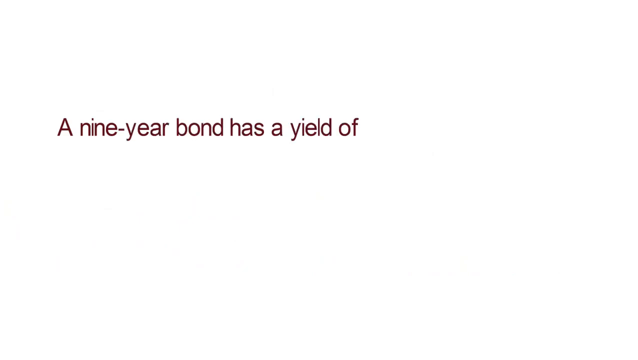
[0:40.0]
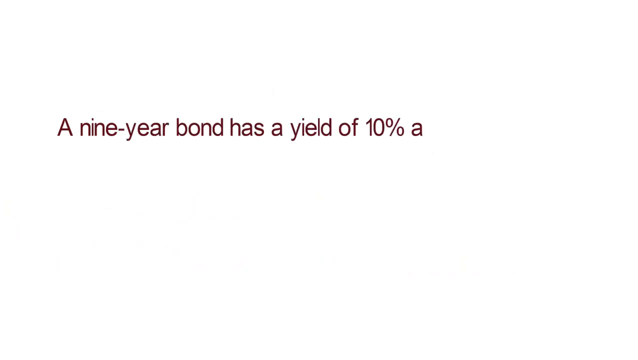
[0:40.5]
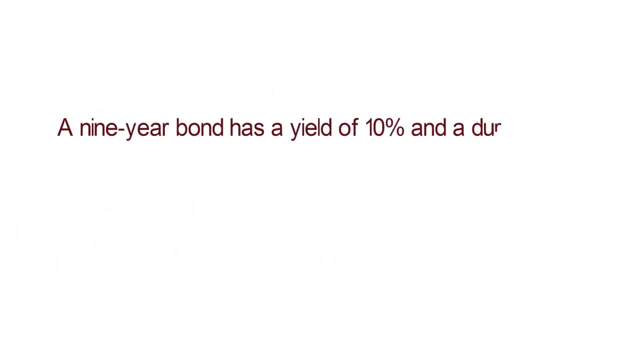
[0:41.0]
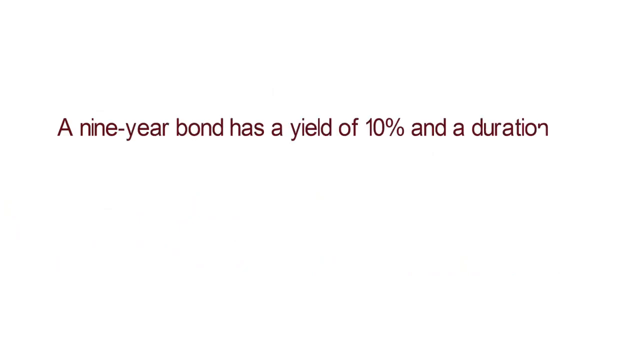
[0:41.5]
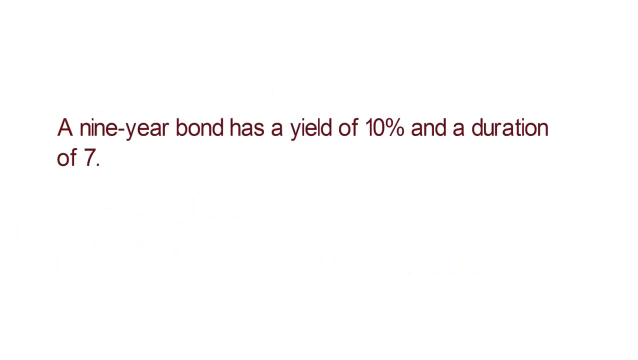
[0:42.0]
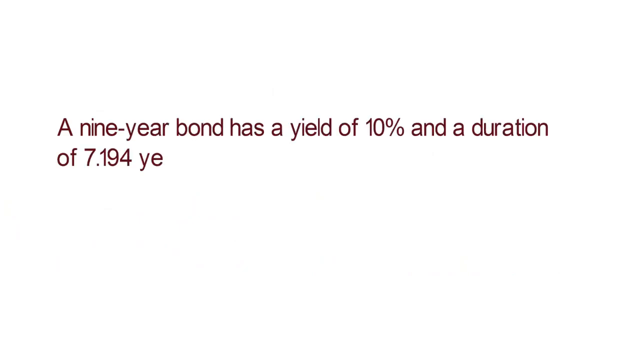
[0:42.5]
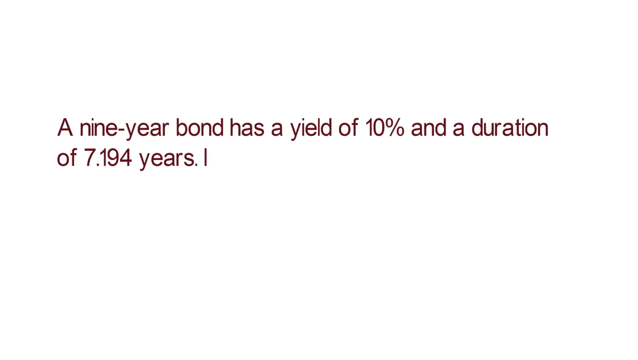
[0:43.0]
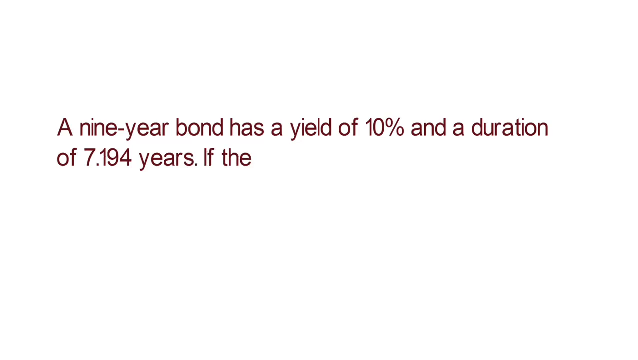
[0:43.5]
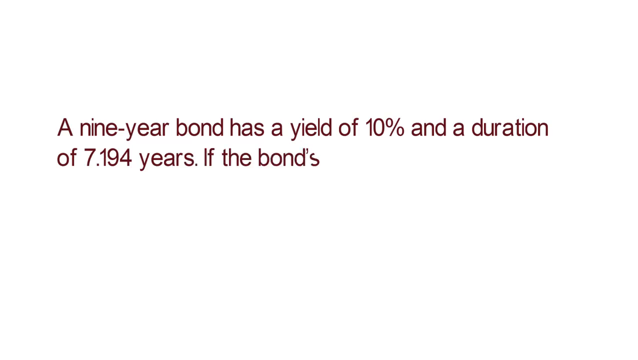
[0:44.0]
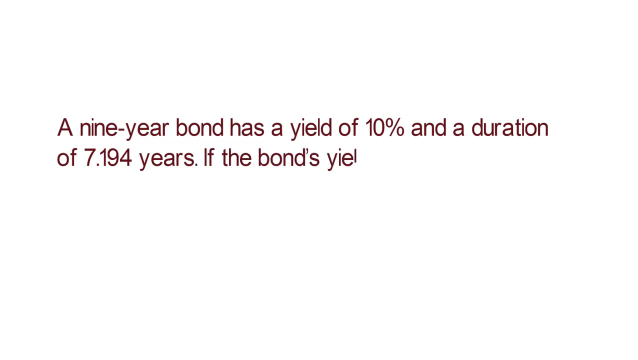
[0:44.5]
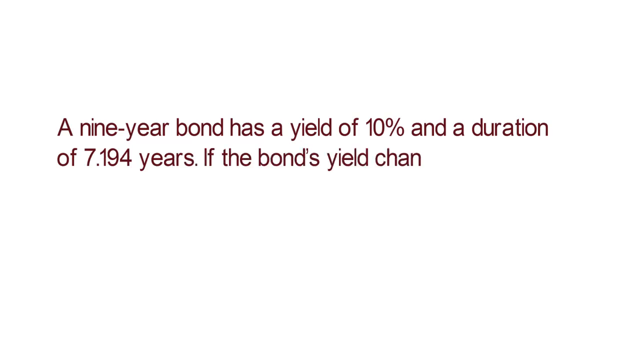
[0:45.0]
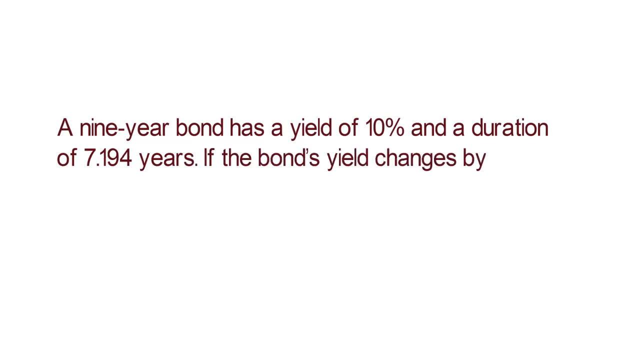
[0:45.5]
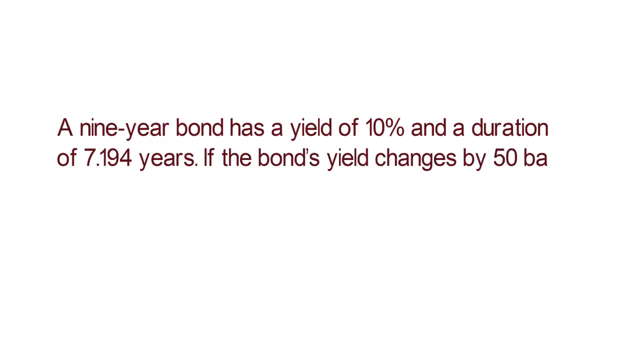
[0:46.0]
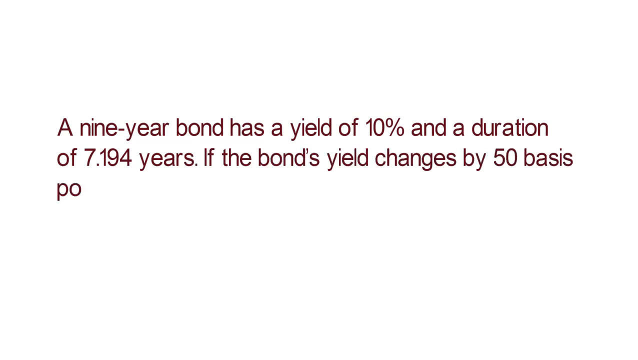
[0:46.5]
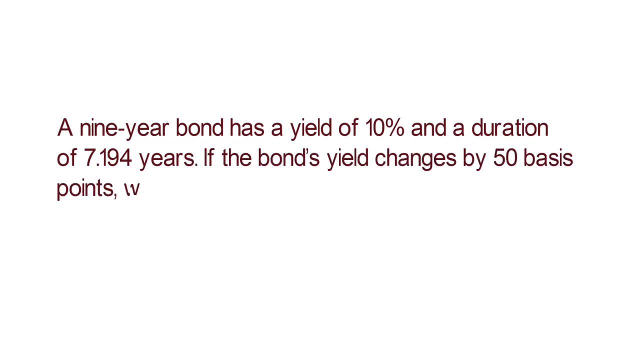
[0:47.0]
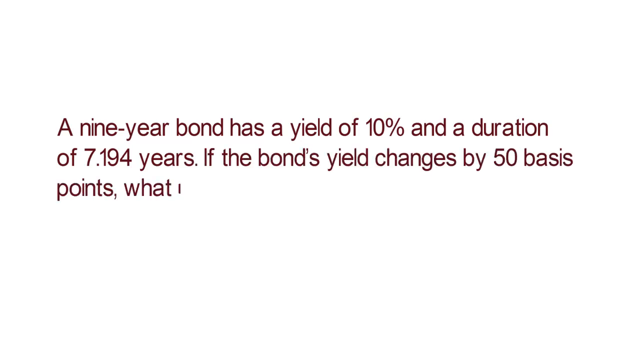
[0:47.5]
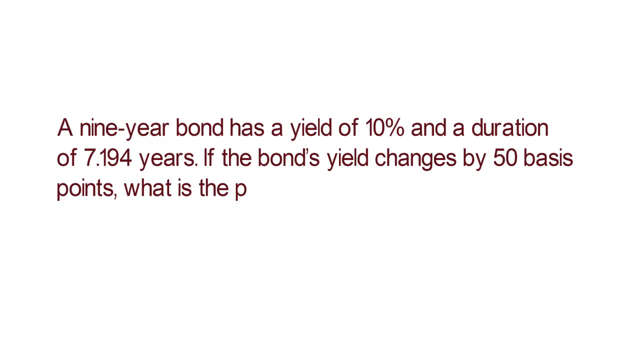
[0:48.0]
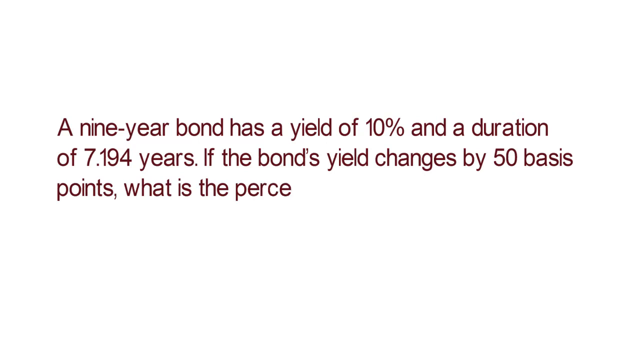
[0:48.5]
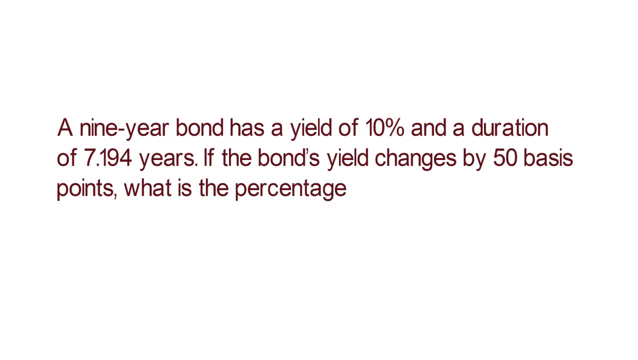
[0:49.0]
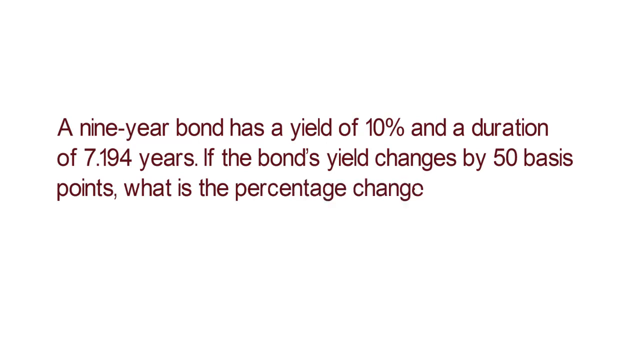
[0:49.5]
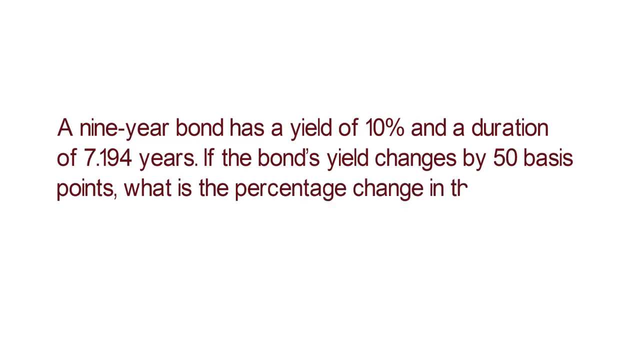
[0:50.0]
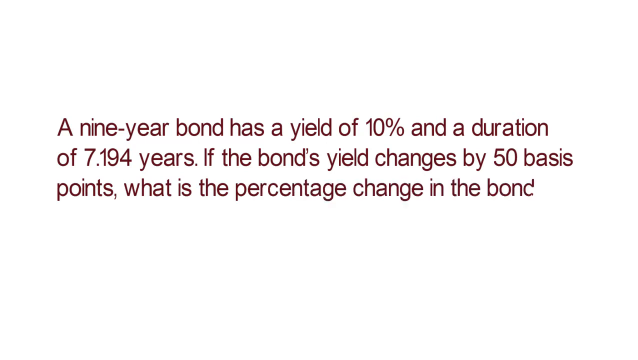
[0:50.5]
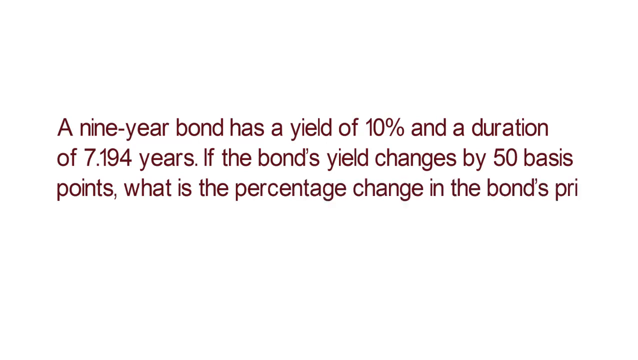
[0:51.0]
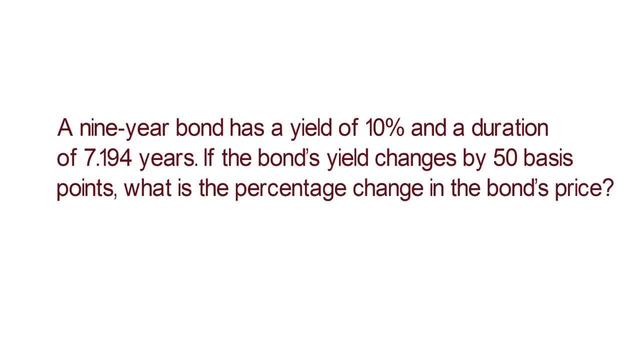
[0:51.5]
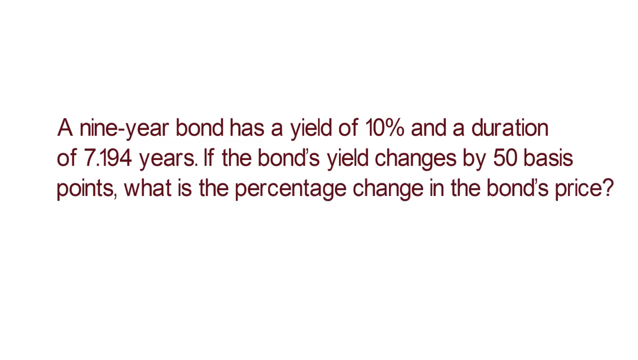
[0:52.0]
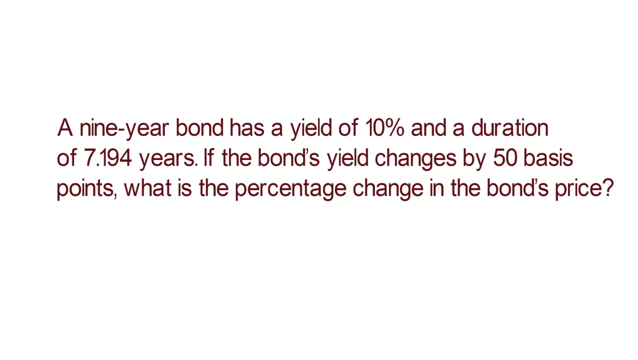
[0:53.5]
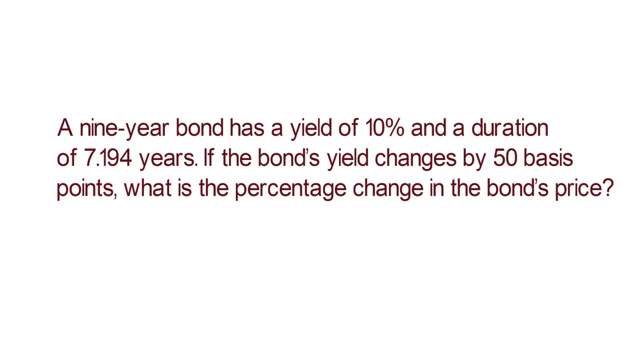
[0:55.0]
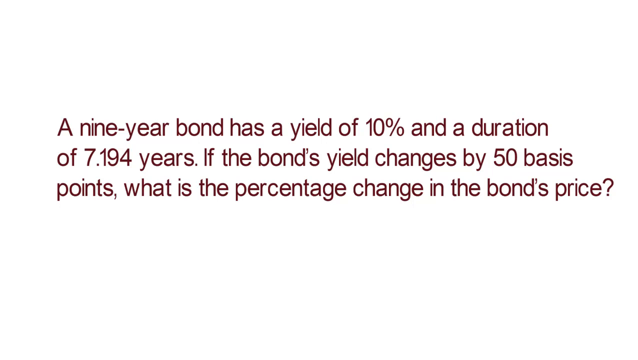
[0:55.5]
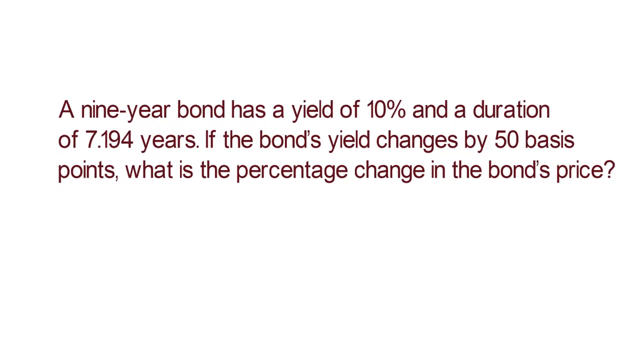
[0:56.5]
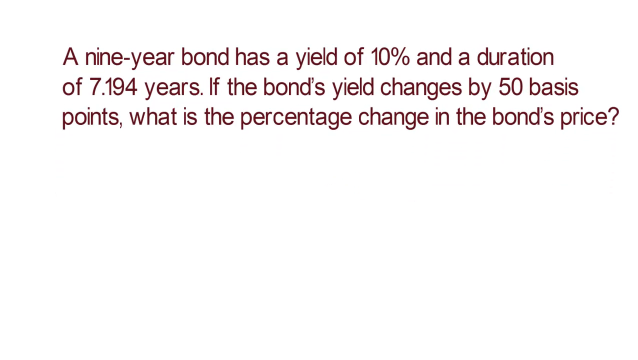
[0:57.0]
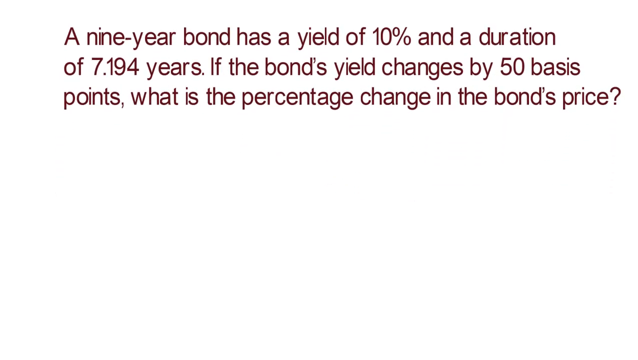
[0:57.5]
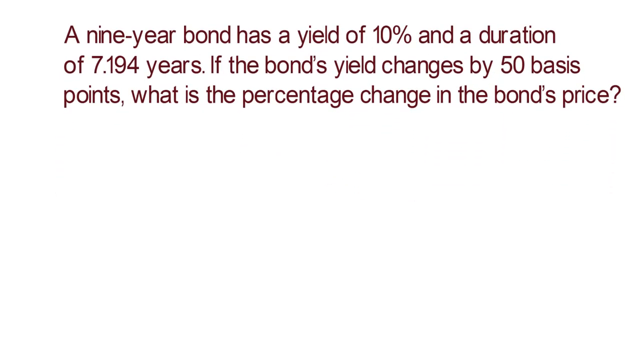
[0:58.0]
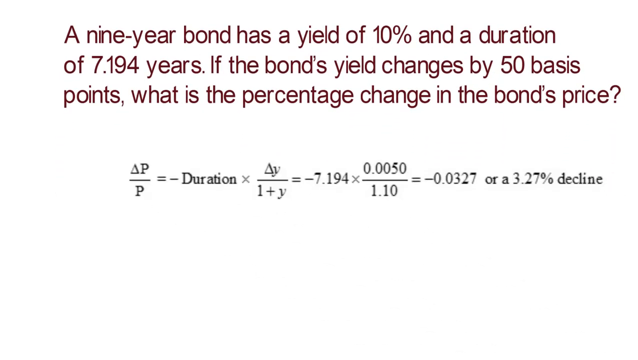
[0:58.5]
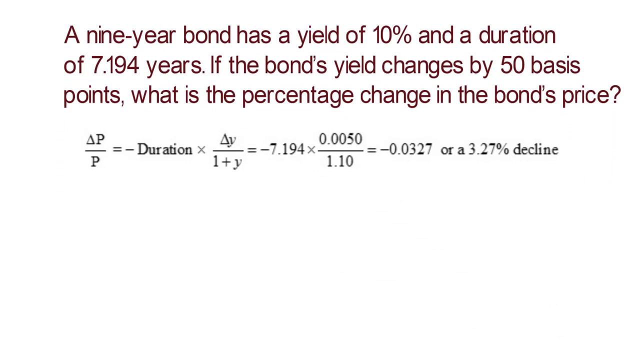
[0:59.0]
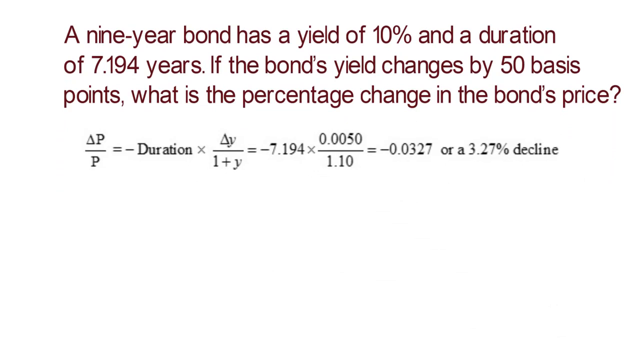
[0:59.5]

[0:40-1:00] The white background screen shows red text reading "a 9 year bond has a yield of 10% and a duration of 0.14 years if the bond's yield changes by 50 basis points what is the percentage change in the bond's price?" The screen then transitions to the full formula needed to calculate the change in the bond's price, shown in black text. No people or animals appear.